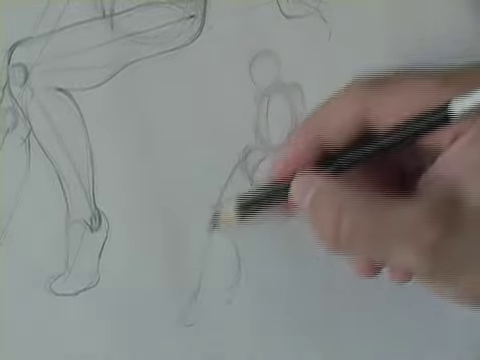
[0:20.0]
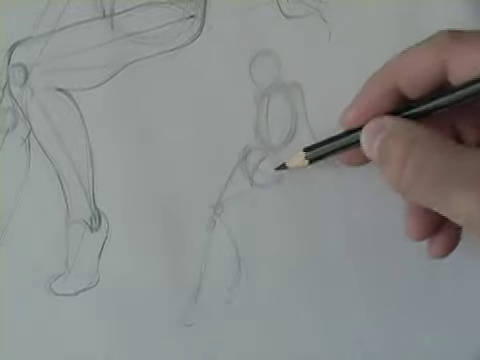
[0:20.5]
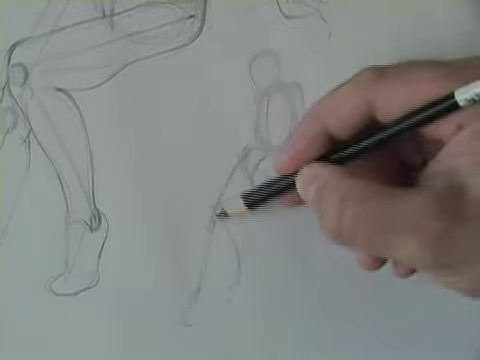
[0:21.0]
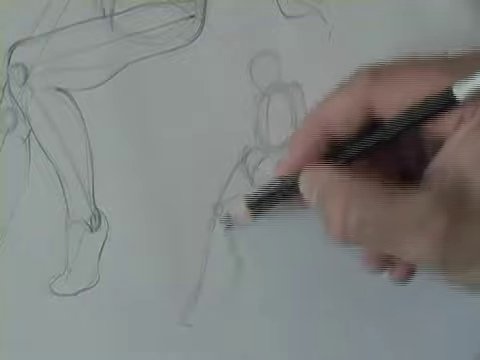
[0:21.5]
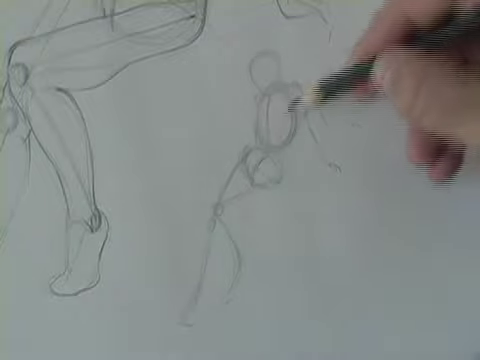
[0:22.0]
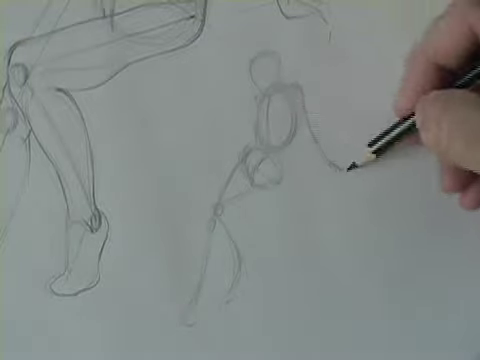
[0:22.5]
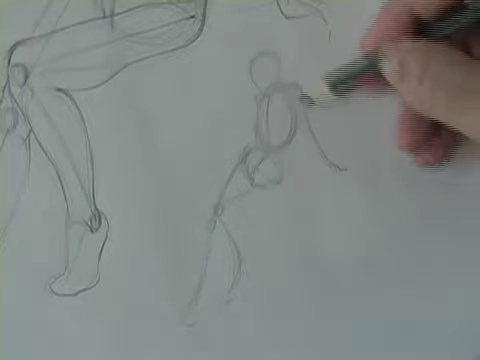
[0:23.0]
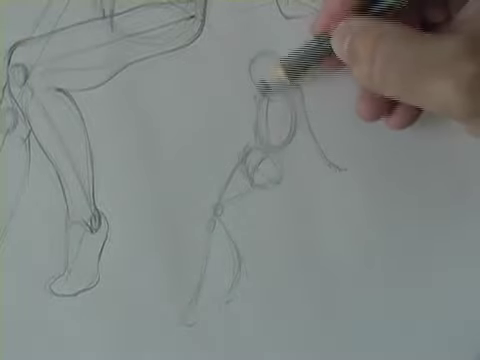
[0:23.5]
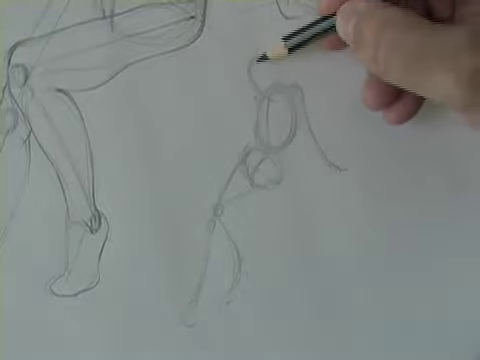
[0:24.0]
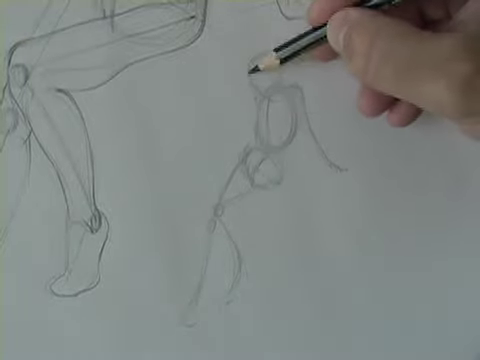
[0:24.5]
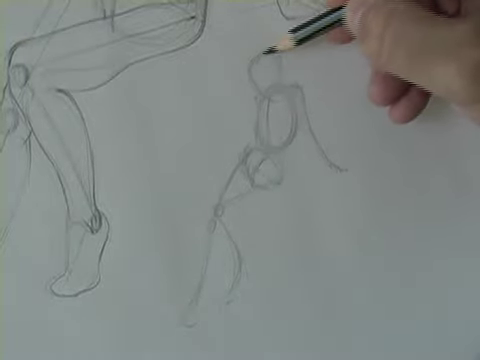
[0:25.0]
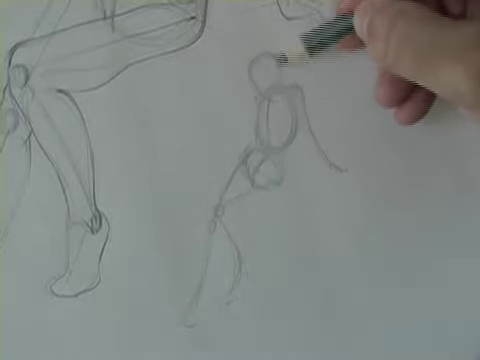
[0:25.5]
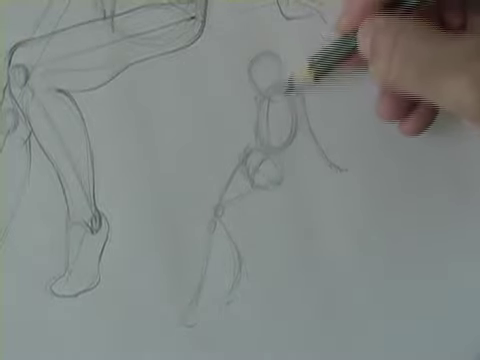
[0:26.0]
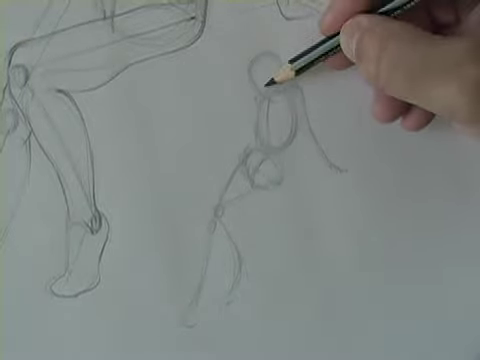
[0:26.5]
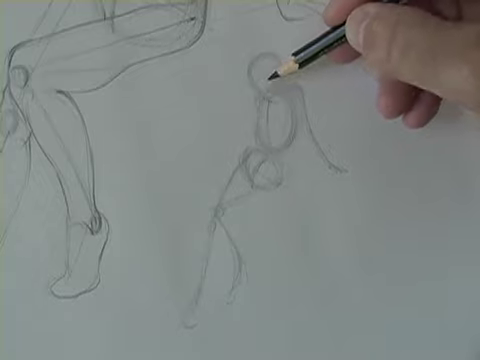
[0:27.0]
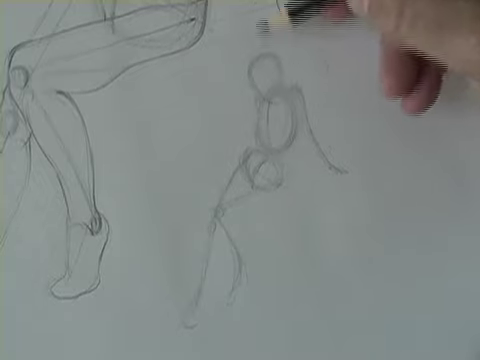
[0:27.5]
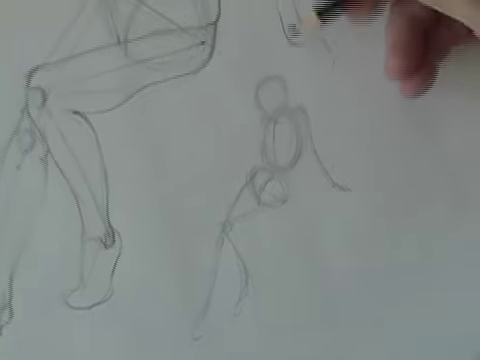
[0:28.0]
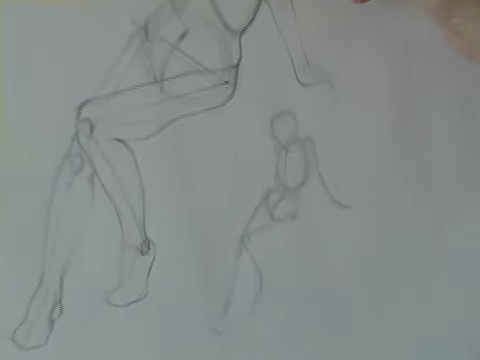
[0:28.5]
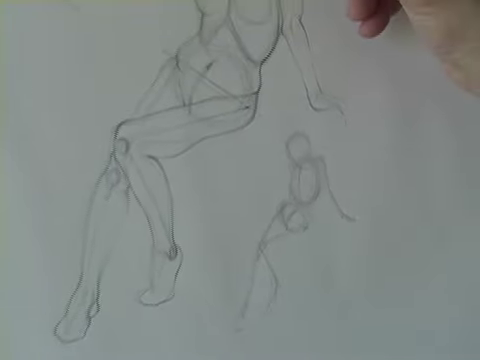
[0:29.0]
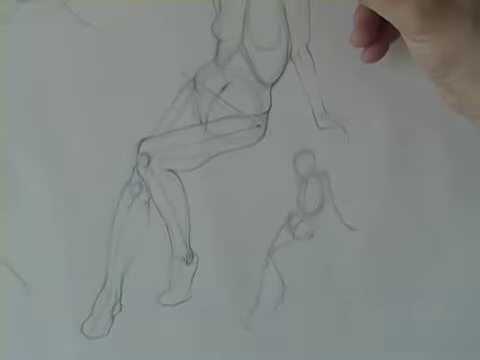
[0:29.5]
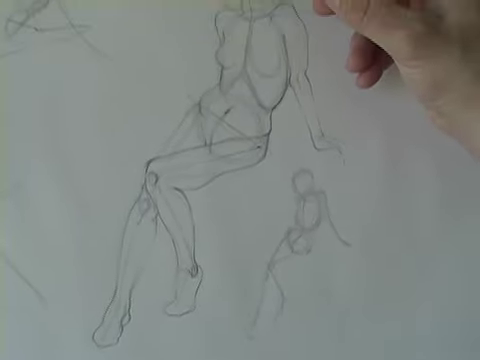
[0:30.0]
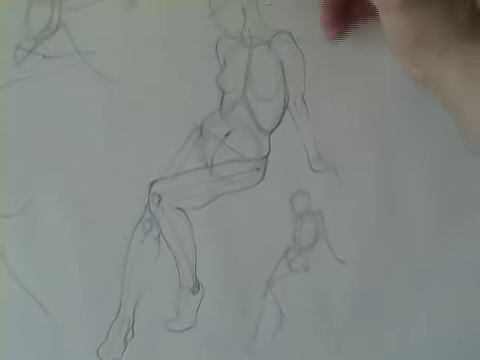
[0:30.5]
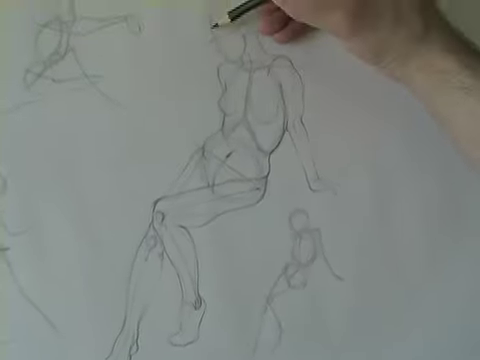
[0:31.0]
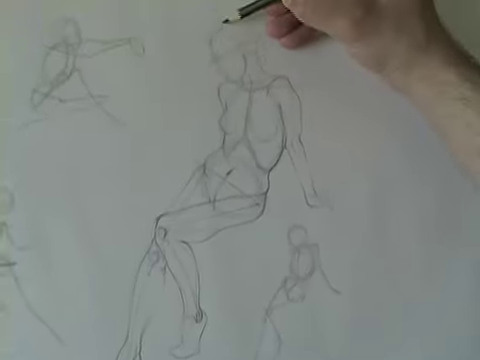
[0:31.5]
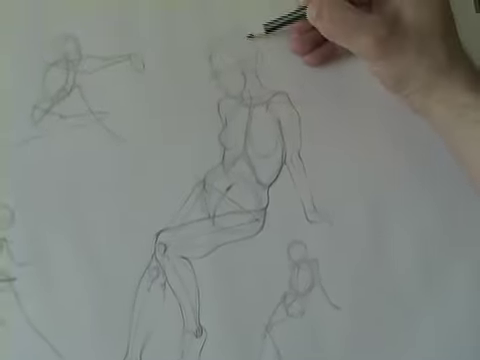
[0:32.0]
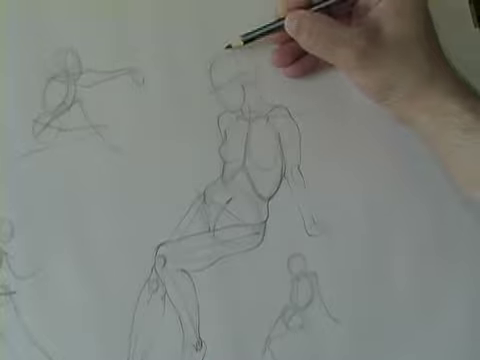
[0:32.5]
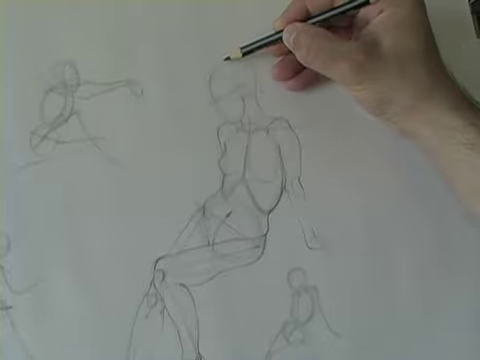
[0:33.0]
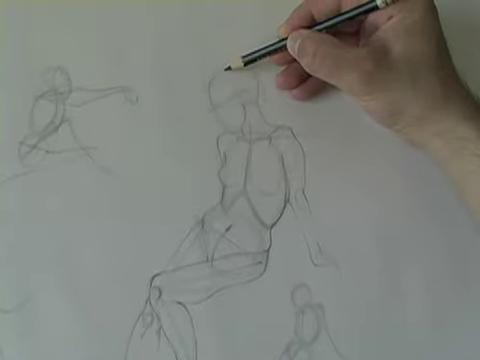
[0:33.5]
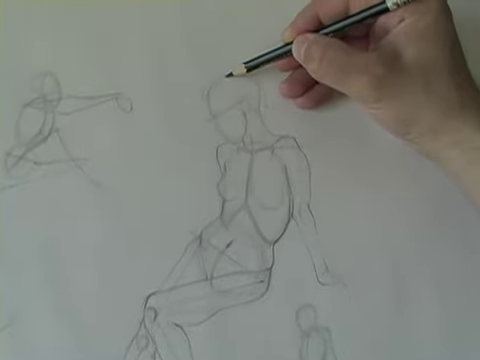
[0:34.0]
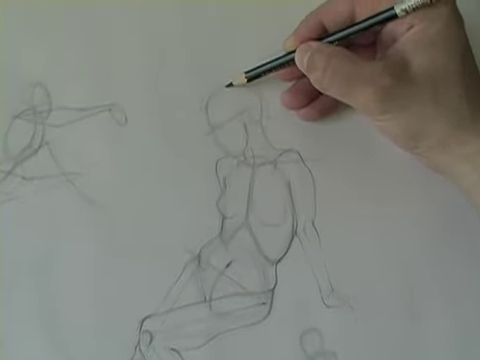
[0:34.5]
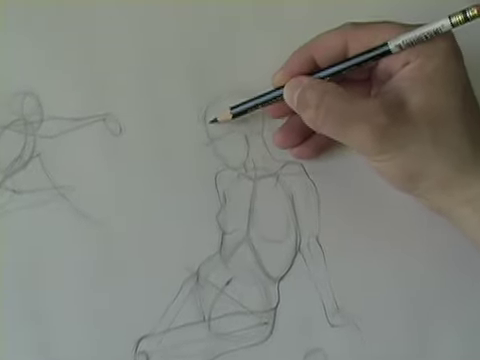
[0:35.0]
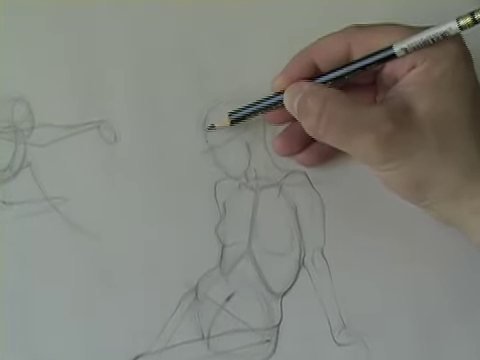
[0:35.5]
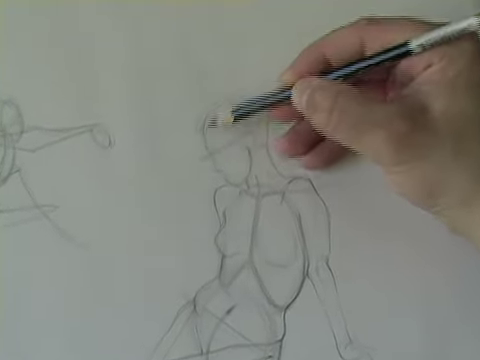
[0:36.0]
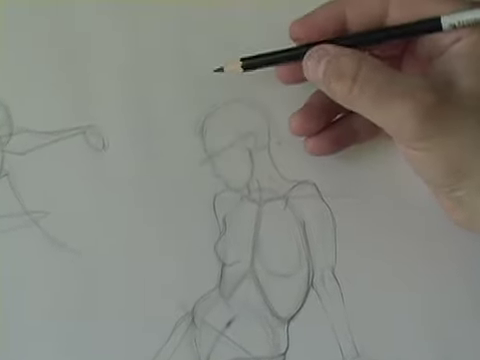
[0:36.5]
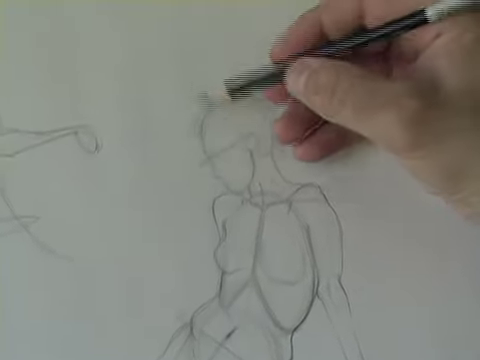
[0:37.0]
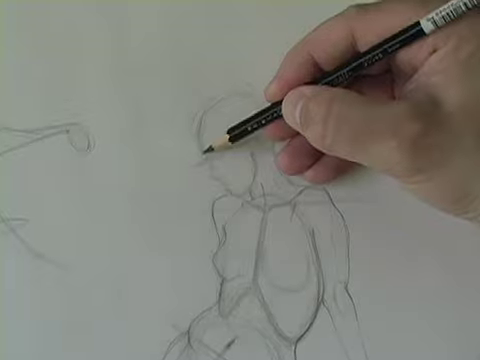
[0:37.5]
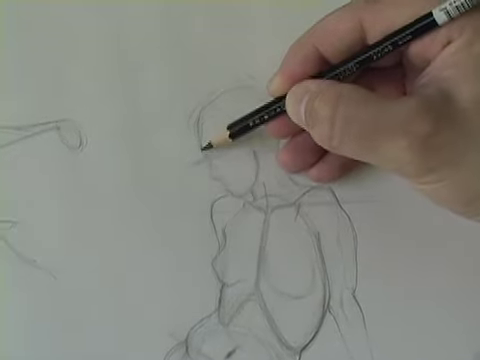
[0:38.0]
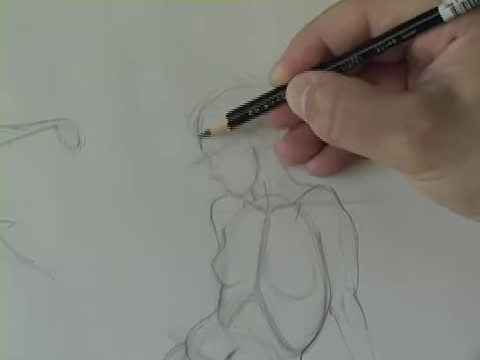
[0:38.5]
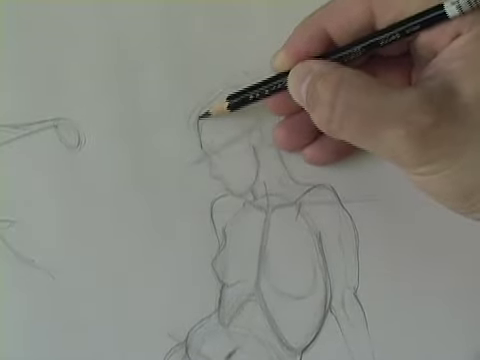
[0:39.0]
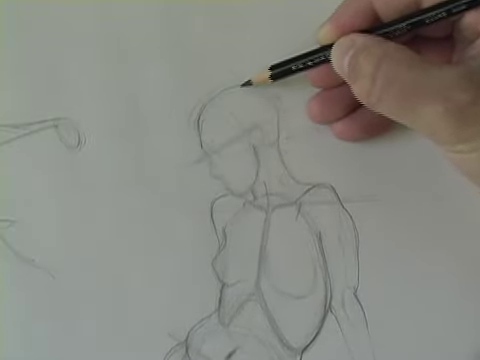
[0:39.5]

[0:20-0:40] The artist keeps drawing on the humanoid caricature, enhancing the coloring of the rough skeleton with the head, torso and upper leg part. The legs have a slight curvature, like on the upper left drawing, and the hand is a bit bent, probably to signify relaxation. The view then moves to the bigger figure, which is more complete: it shows details such as the knees, some body fat drawn on the thighs, the belly with a belly button, the shape of the breasts, and how the hand and shoulder are drawn. The figure is in a relaxed sitting pose on something like a stool or a bar. Some details on the head are being painted more heavily to make them more visible, and the rough location of the ear is marked on the side of the head.